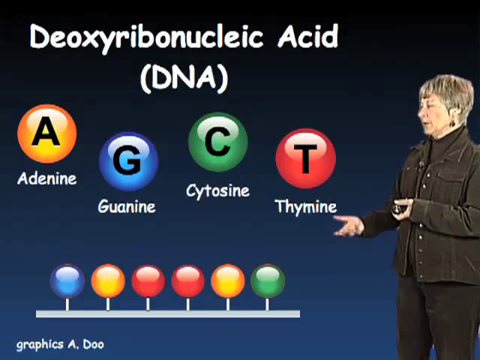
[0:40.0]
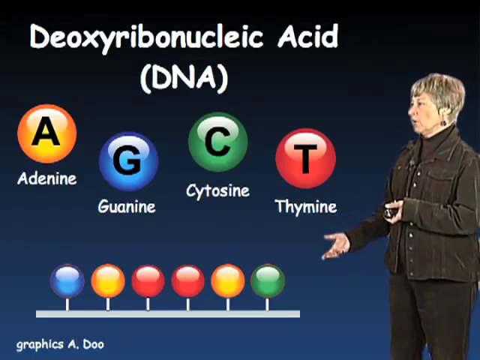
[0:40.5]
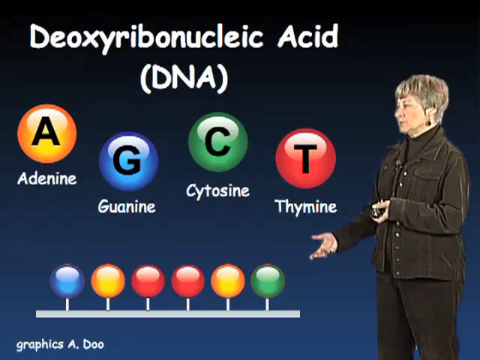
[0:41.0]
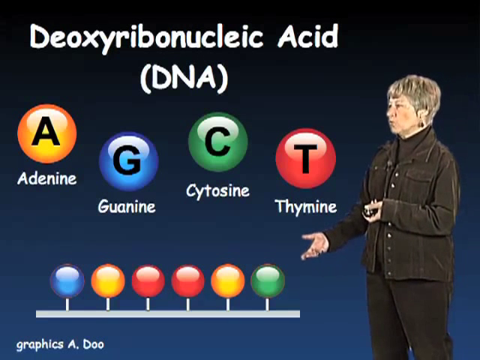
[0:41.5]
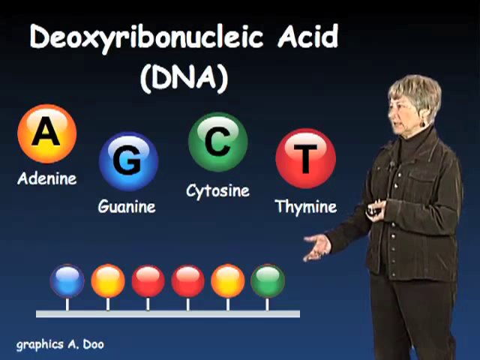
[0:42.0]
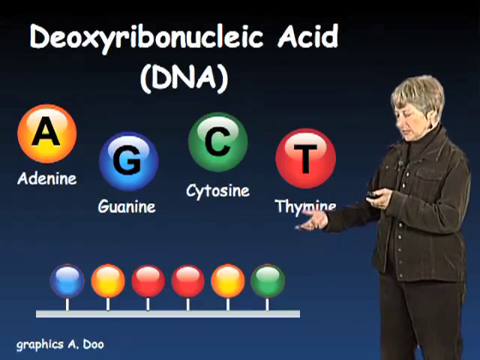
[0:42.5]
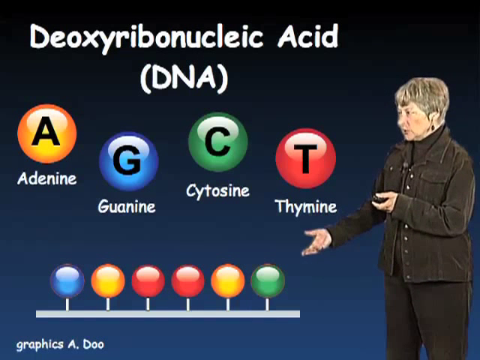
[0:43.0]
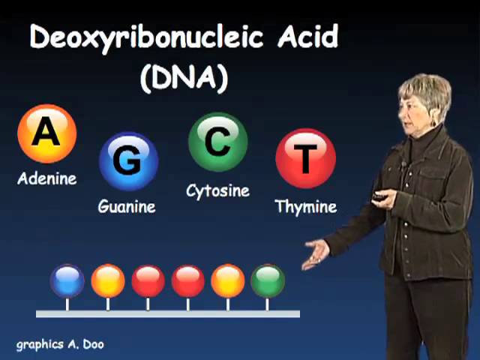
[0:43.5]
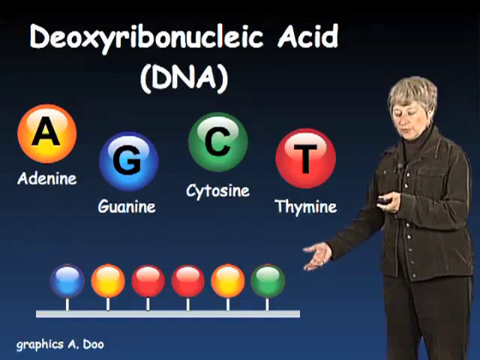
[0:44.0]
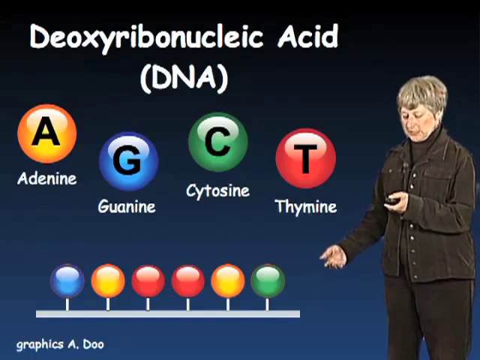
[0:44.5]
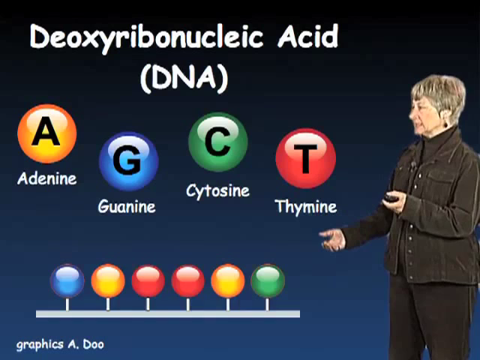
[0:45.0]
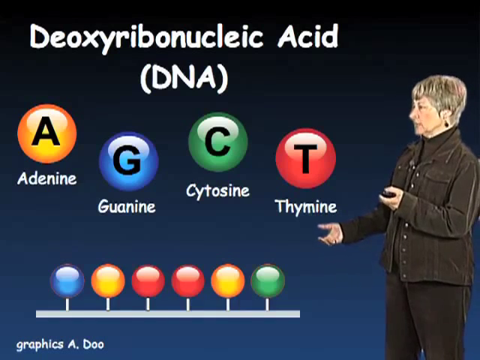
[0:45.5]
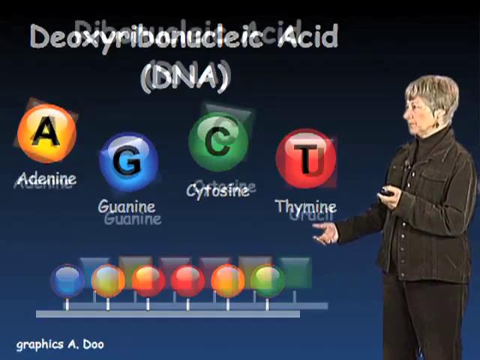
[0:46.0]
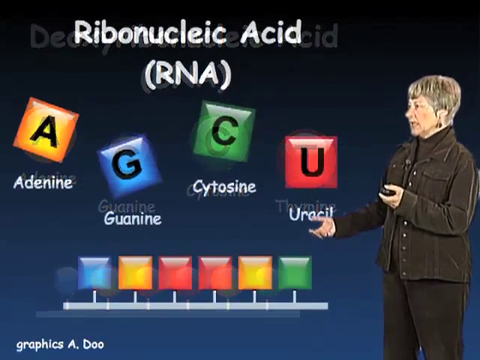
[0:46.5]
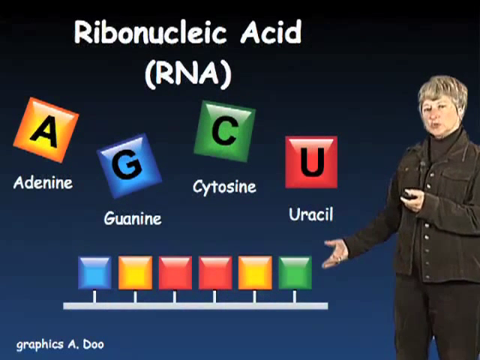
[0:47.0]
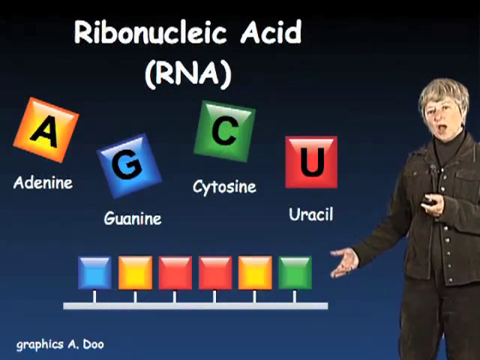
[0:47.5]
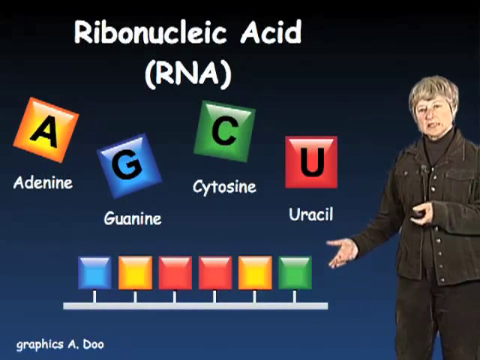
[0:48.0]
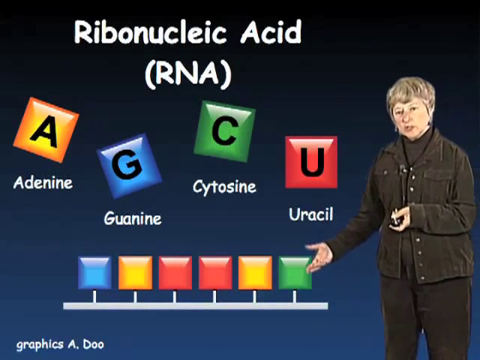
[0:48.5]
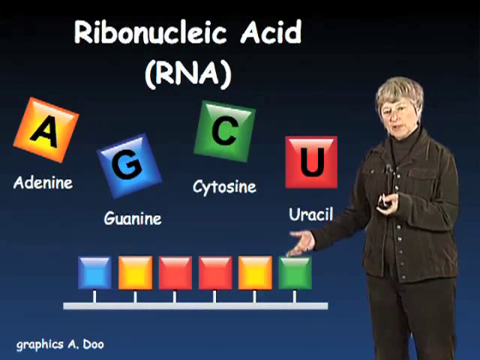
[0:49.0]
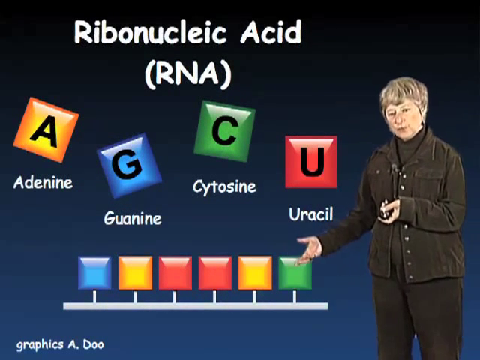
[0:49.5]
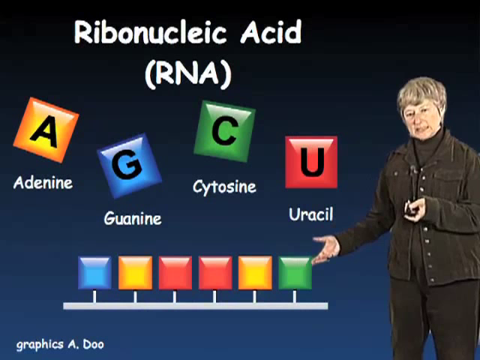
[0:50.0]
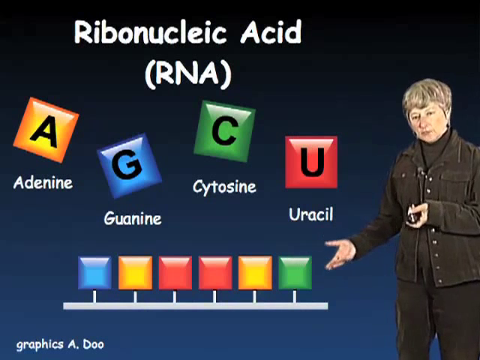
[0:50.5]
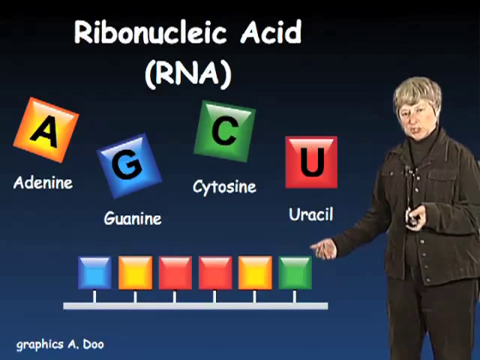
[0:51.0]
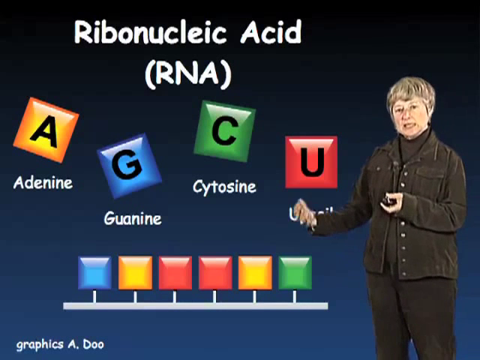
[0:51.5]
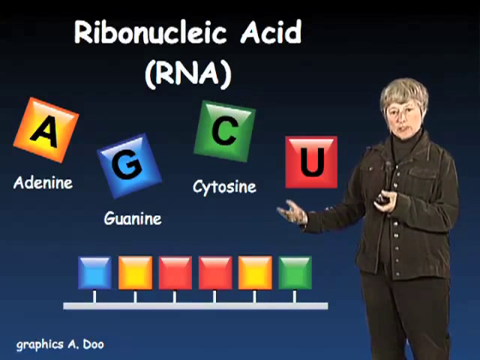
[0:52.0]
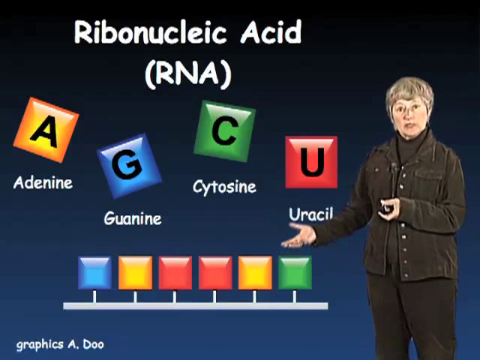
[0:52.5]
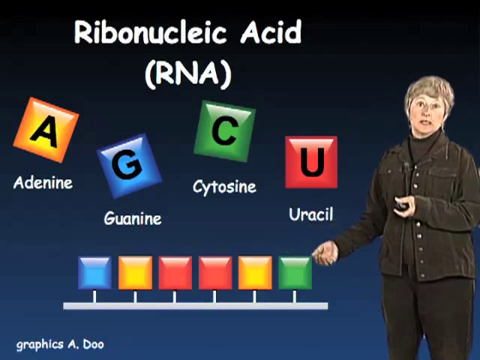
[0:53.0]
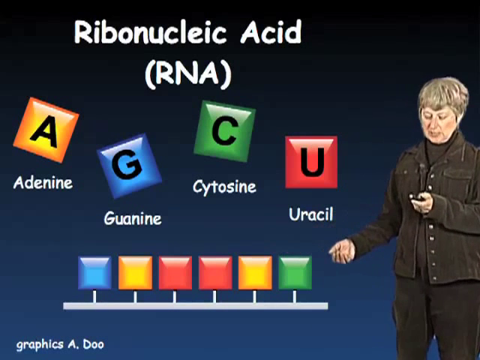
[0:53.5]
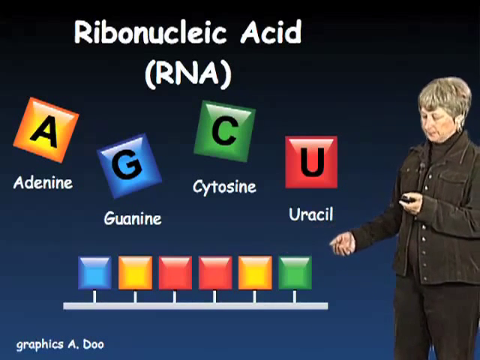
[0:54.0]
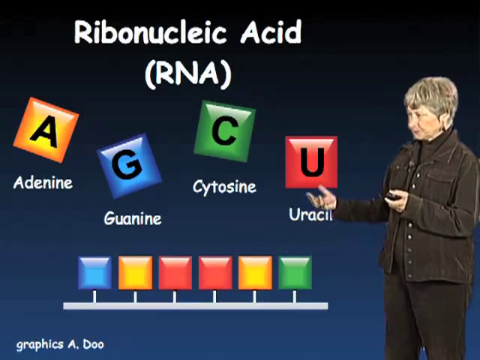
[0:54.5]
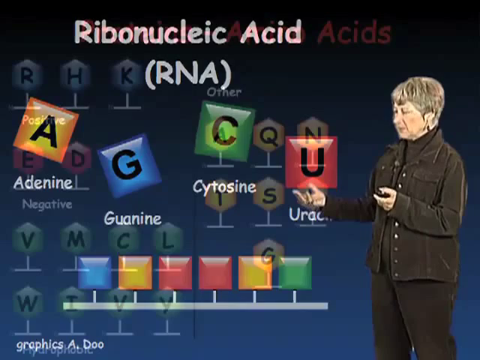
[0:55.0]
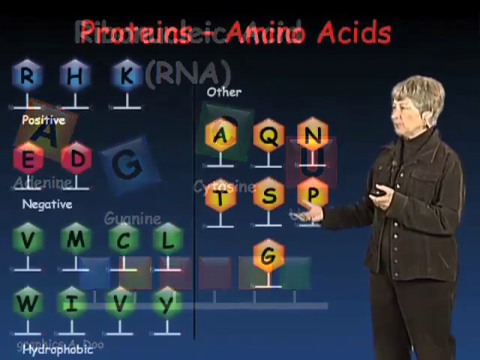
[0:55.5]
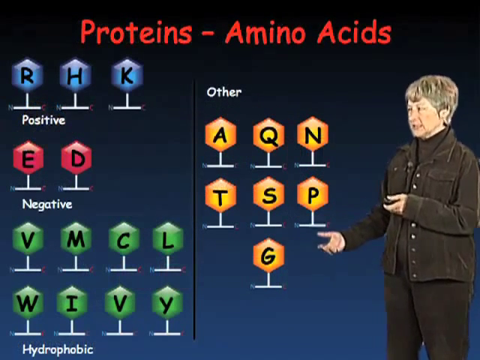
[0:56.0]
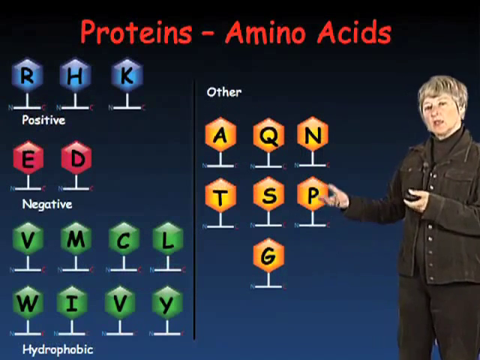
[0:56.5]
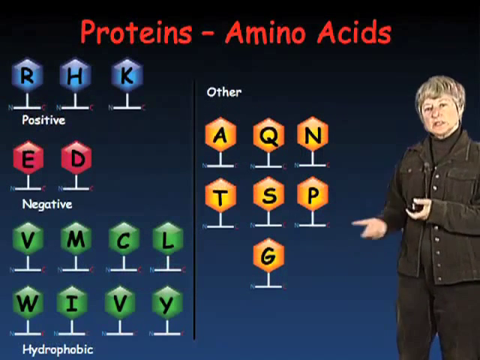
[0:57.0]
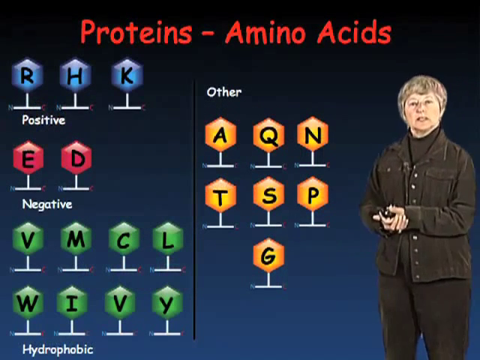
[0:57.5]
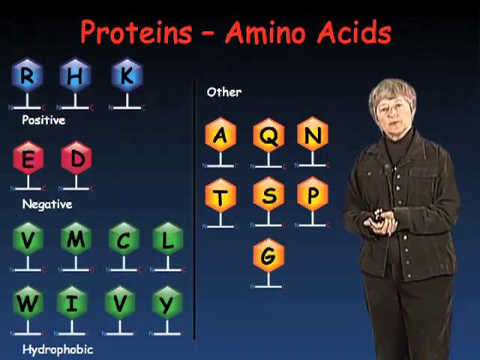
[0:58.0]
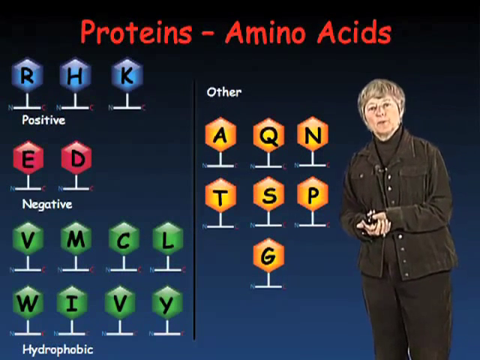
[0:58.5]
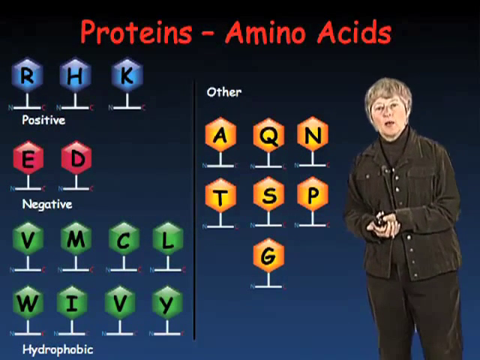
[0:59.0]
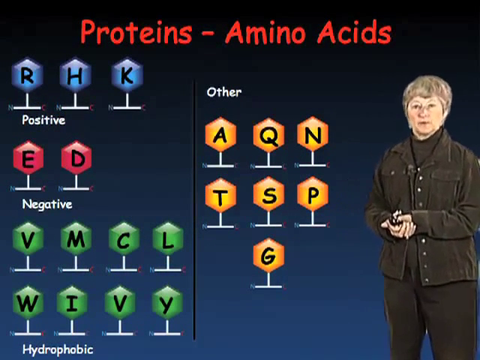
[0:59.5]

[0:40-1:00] A woman stands in the bottom right corner of the screen. She has short gray hair and wears a gray pants outfit with a gray turtleneck underneath. She gestures with her right hand and holds a clicker in her left hand. The screen reads "deoxyribonucleic acid (DNA)" and shows four colored circles running from the left toward the center: a gold circle with an A and "adenine" underneath, a blue circle with a G labeled "guanine," a green circle with a C labeled "cytosine," and a red circle with a T labeled "thymine." In the far left corner are colored circles on sticks on a stand, in the order blue, orange, red, red, orange, green from left to right. A new screen appears with "ribonucleic acid (RNA)" at the top and a row of squares: a yellow square with an A and "adenine" underneath, a blue square with a G and "guanine" underneath, a green square with a C labeled "cytosine," and a red square with a U labeled "uracil." At the bottom left of the screen are colored squares on sticks on a platform, from left to right blue, gold, red, red, gold, green. Then a new chart appears as the woman continues speaking, titled "proteins - amino acids," showing several pairings that are positive and negative, followed by other pairings.